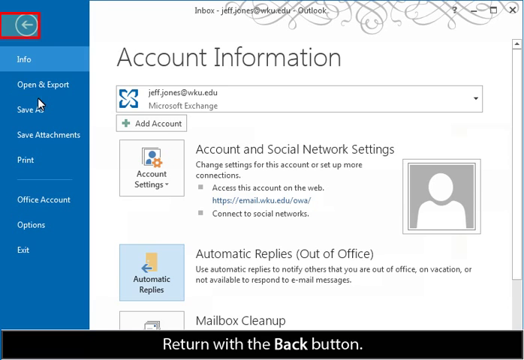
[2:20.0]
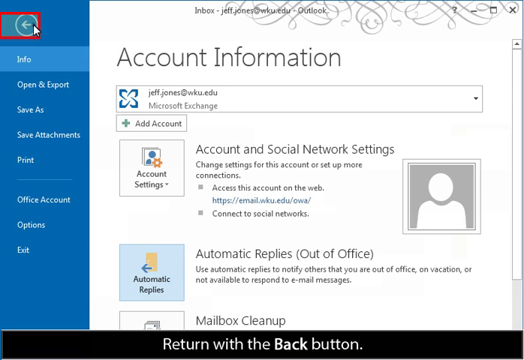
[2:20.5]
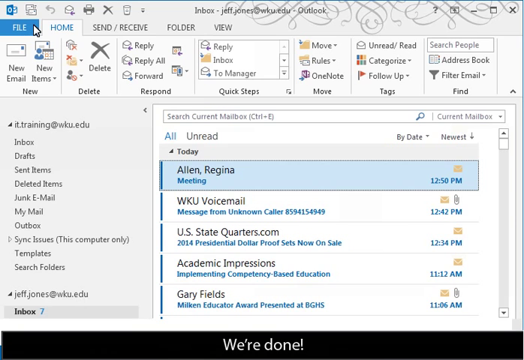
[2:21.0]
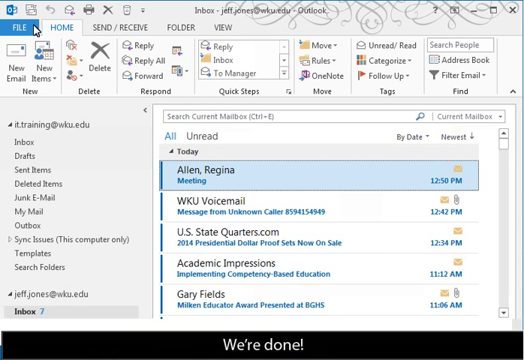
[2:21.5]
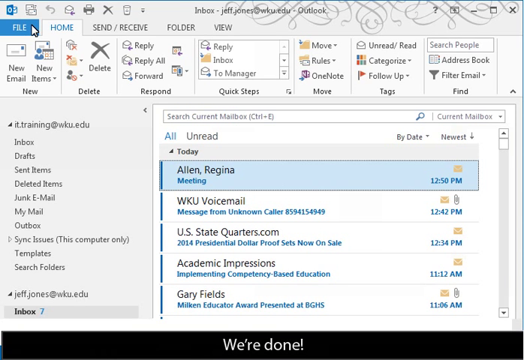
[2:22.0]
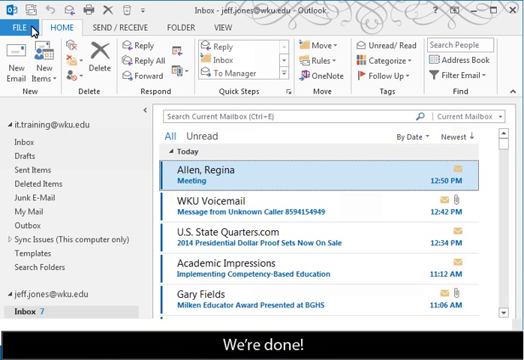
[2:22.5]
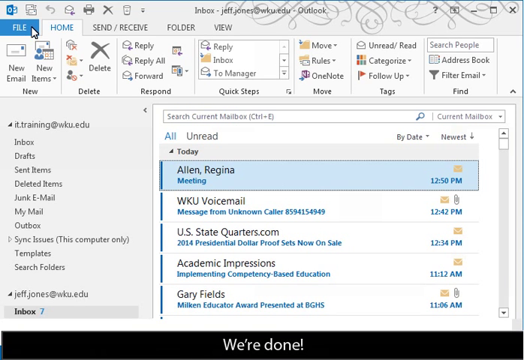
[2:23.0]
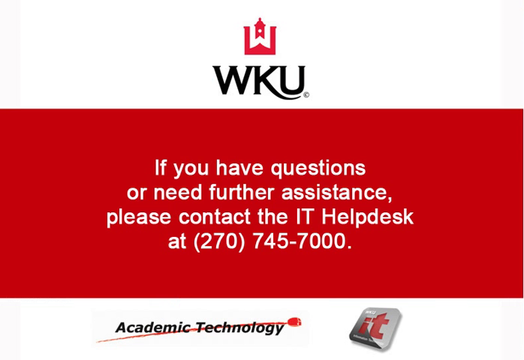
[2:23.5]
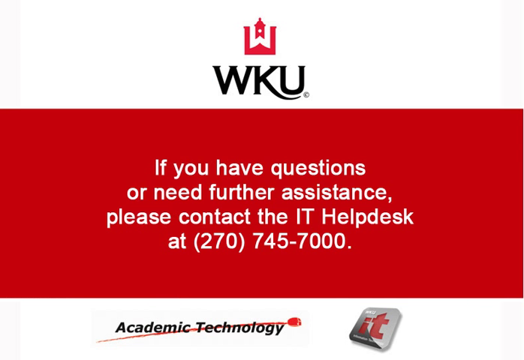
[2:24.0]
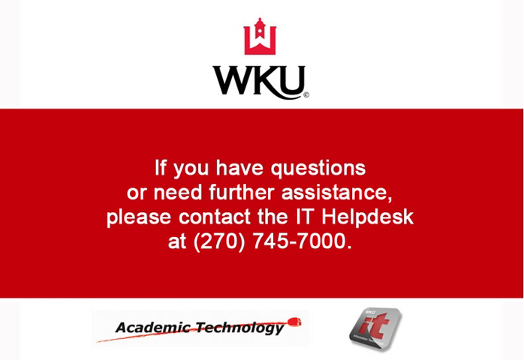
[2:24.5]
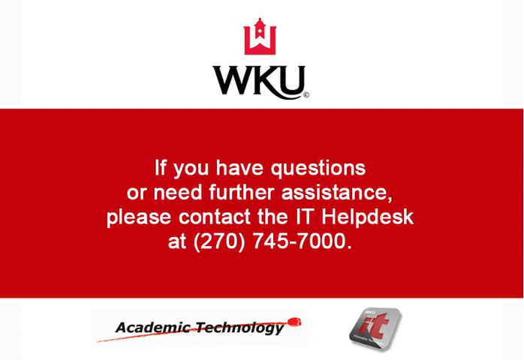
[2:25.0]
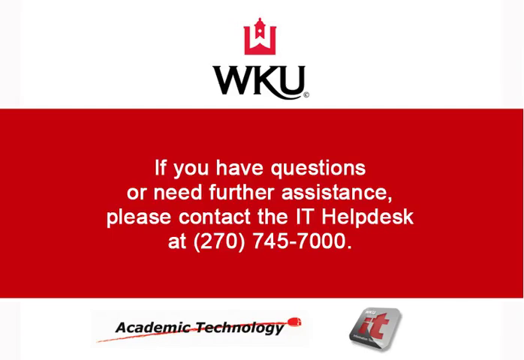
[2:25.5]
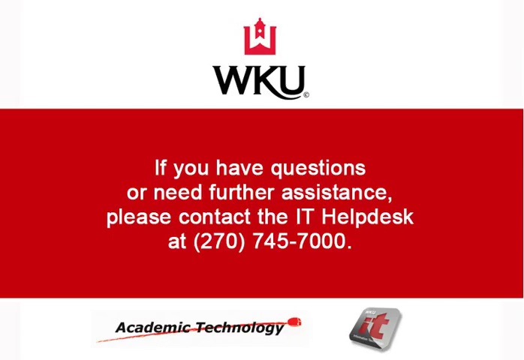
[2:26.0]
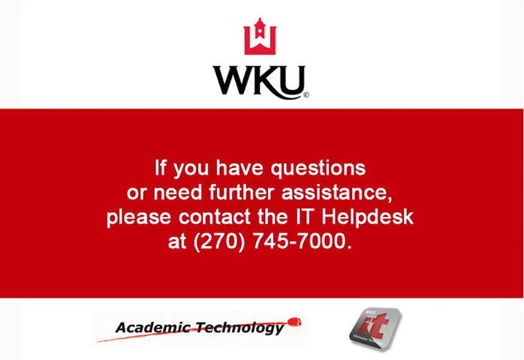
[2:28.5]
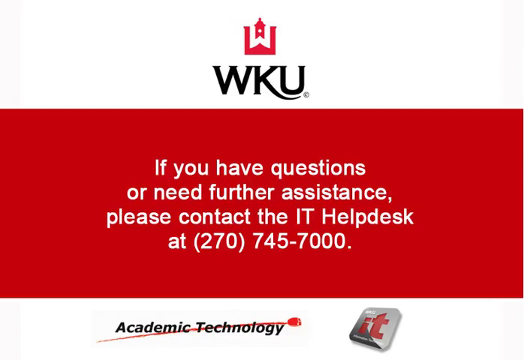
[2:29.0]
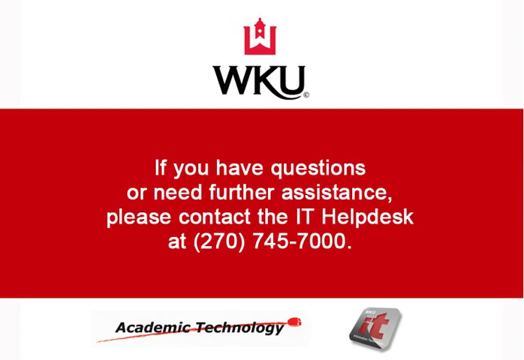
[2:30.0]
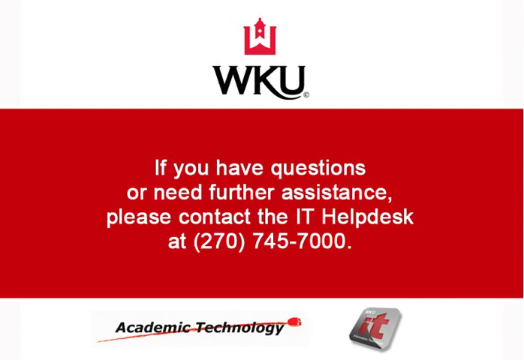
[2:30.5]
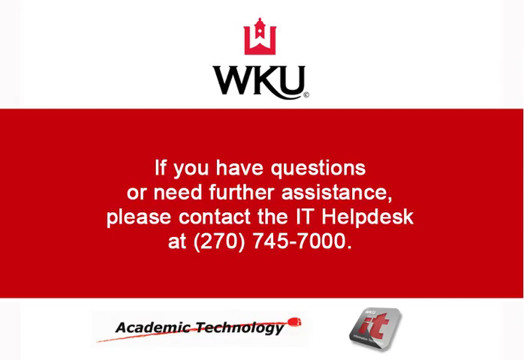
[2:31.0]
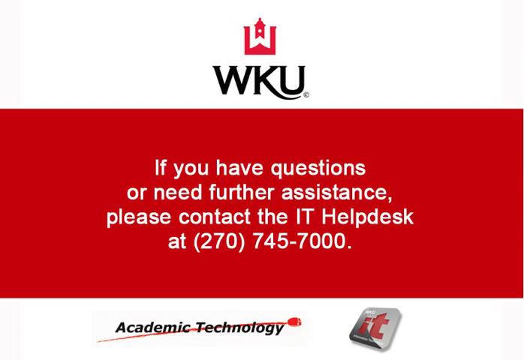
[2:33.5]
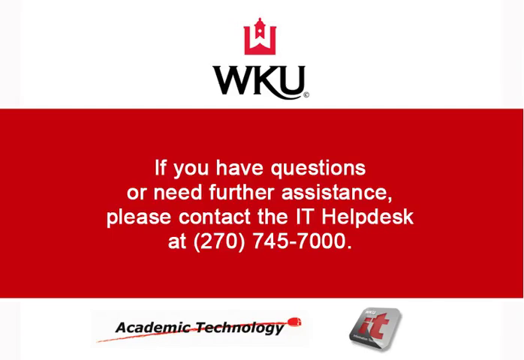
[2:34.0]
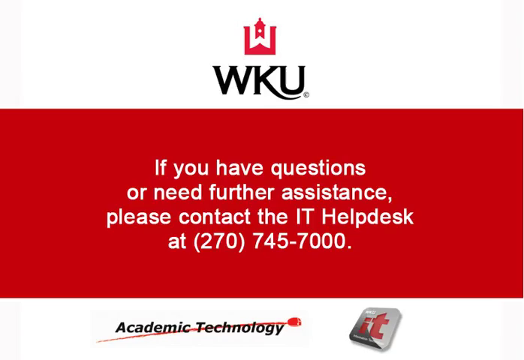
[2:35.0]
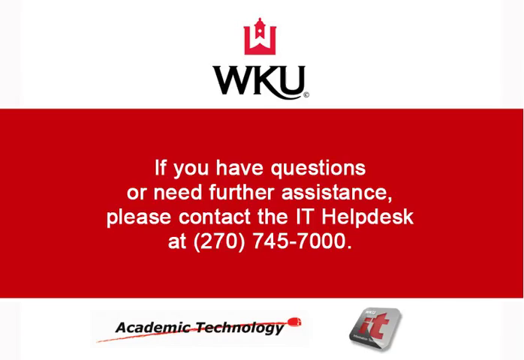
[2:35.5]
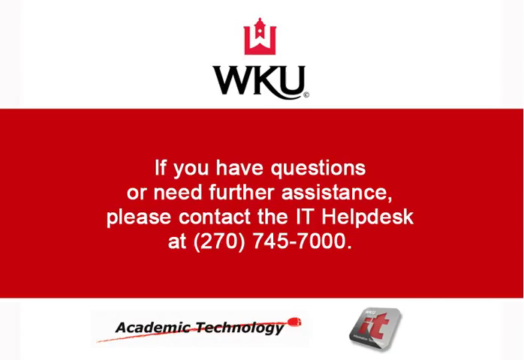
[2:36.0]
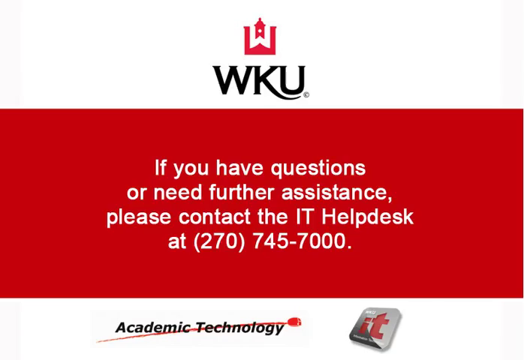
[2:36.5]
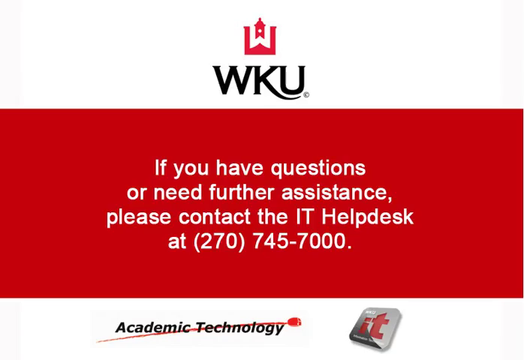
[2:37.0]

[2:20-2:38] A computer screen shows a blue vertical column on the left, with "Info" at the top and "Open and Export," "Save As," "Save Attachments," "Print," "Office Account," "Options" and "Exit" below. To the right is a white area titled "Account Information," listing "jeffjones@wku.edu, Microsoft Exchange," "Add Account," "Account Settings," "Account and Social Network Settings," "Change Settings for this account, or Set Up More Connections," "Access This Account on the Web," "Connect to Social Networks," then "Automatic Replies, Out of Office" with "Use Automatic Replies to notify others that you were out of office on vacation or not available to respond to email messages," and below that "Mailbox Cleanup." Another screen appears briefly, followed by a red screen with the WKU logo at the top. In the red area it says "If you have questions or need further assistance, please contact the IT help desk at 270-745-7000," and beneath it a gray horizontal bar reads "academic technology."